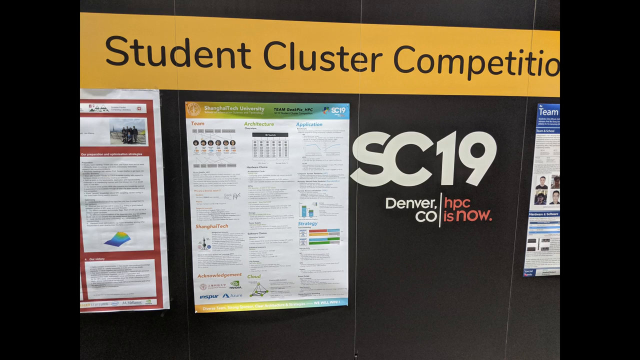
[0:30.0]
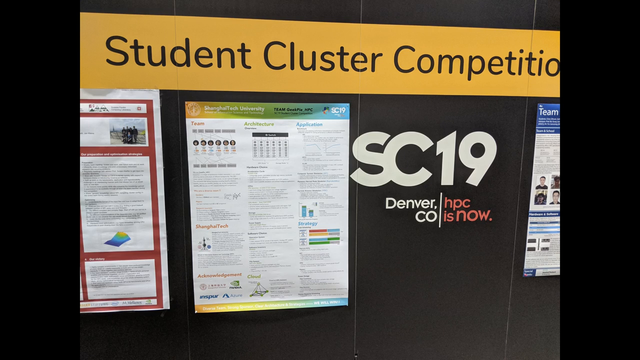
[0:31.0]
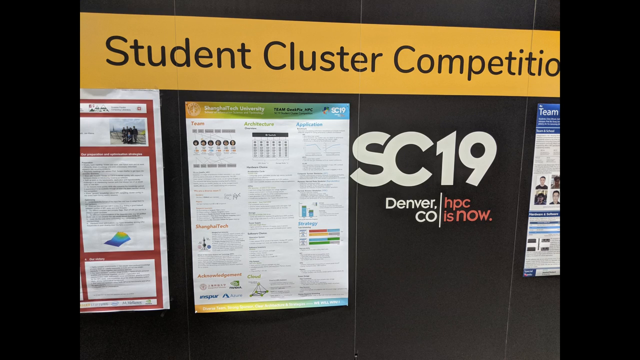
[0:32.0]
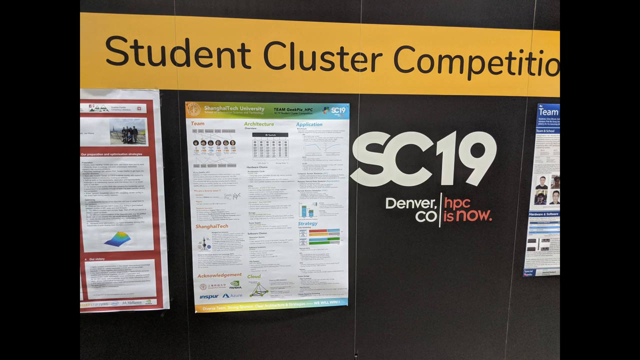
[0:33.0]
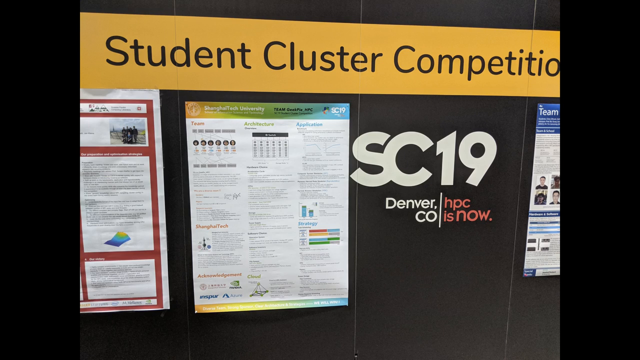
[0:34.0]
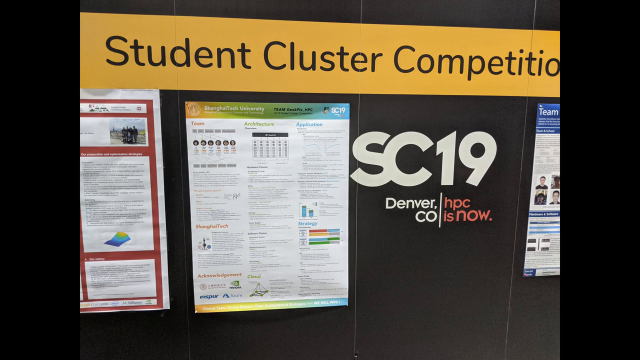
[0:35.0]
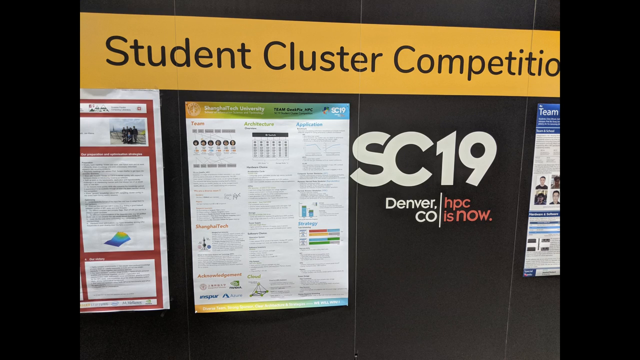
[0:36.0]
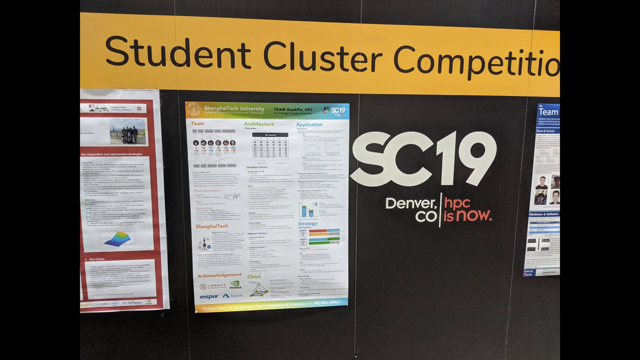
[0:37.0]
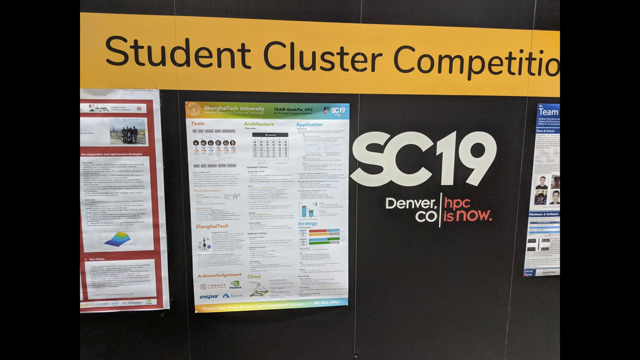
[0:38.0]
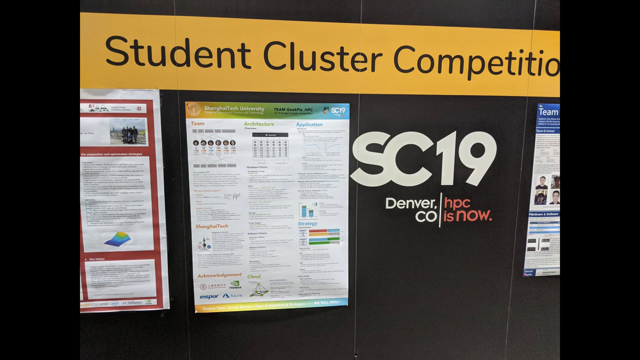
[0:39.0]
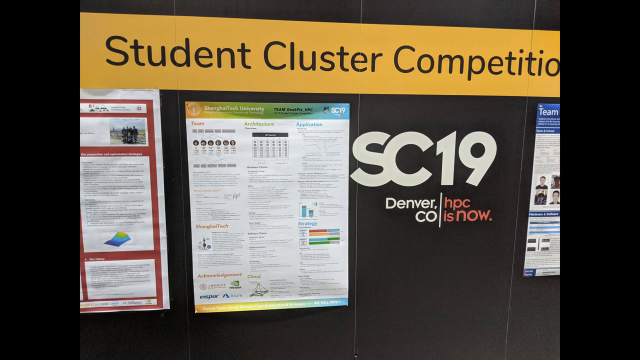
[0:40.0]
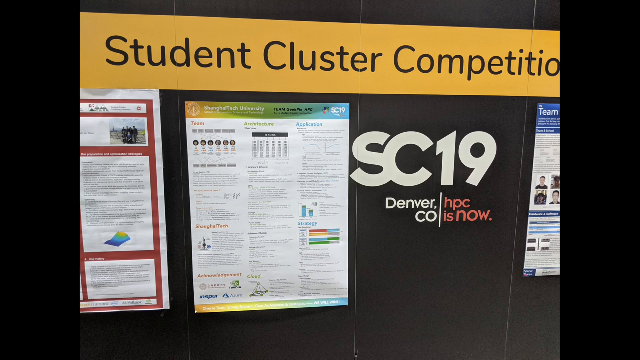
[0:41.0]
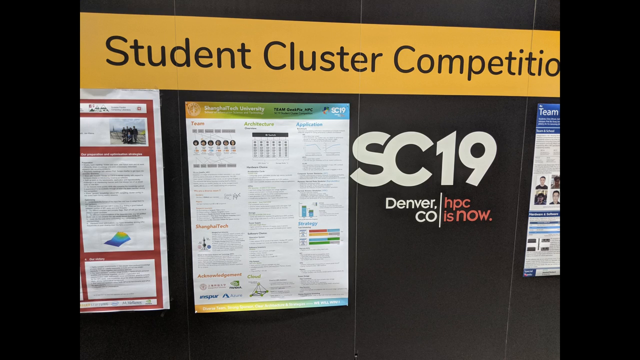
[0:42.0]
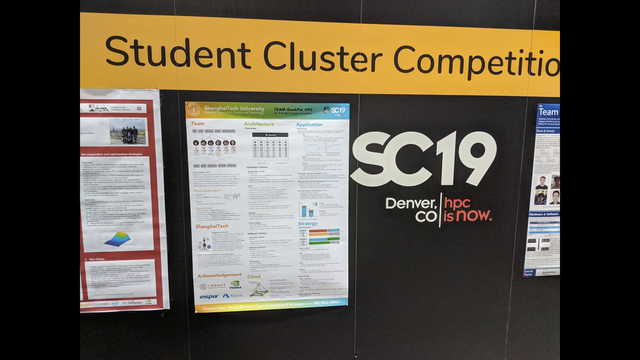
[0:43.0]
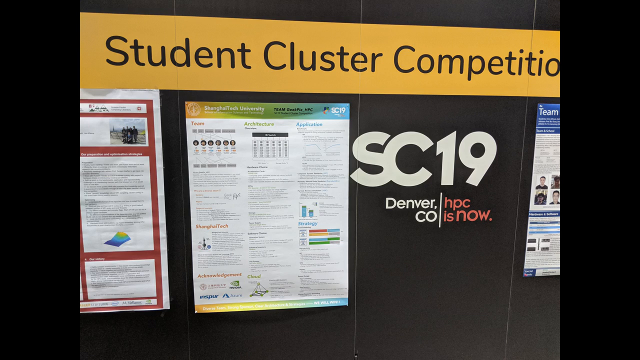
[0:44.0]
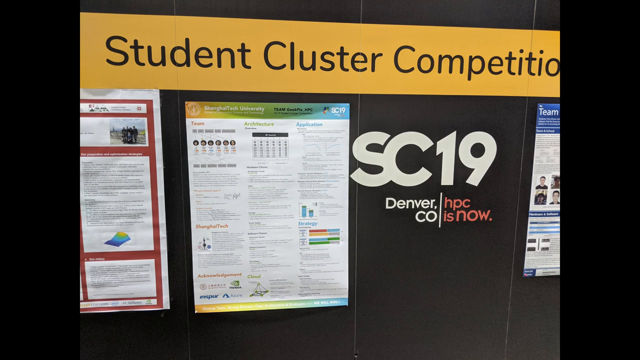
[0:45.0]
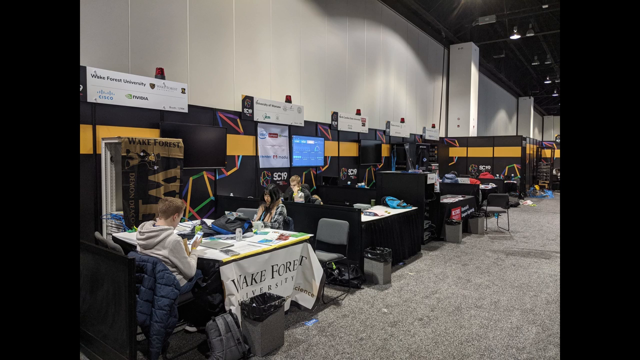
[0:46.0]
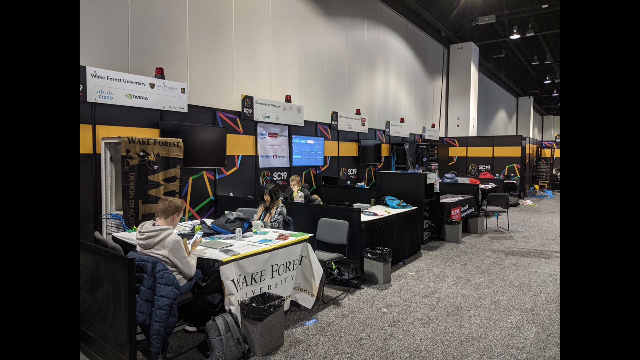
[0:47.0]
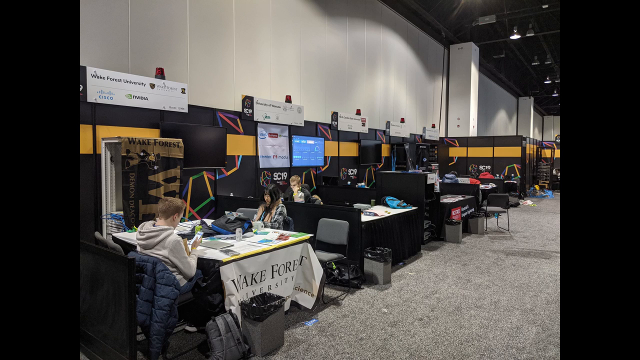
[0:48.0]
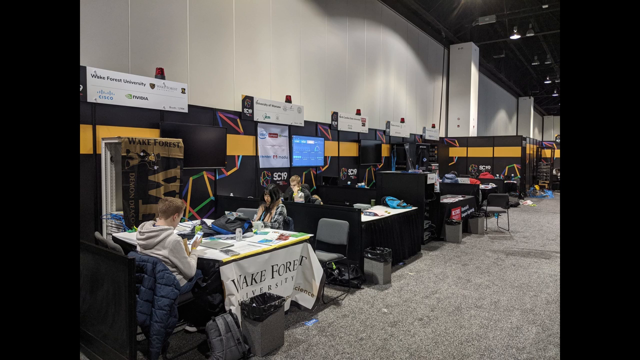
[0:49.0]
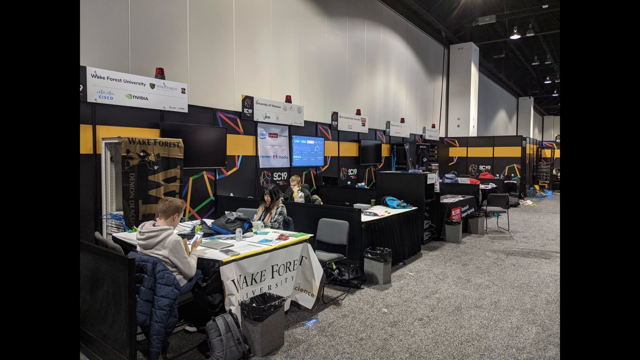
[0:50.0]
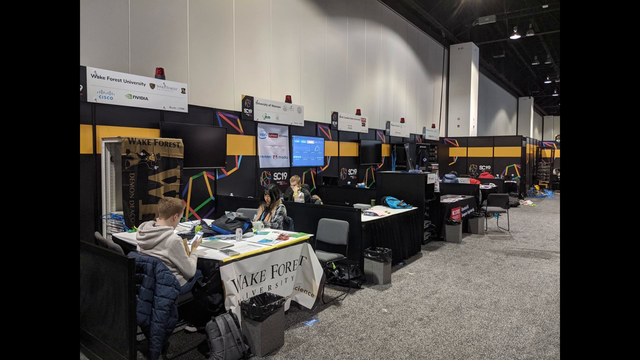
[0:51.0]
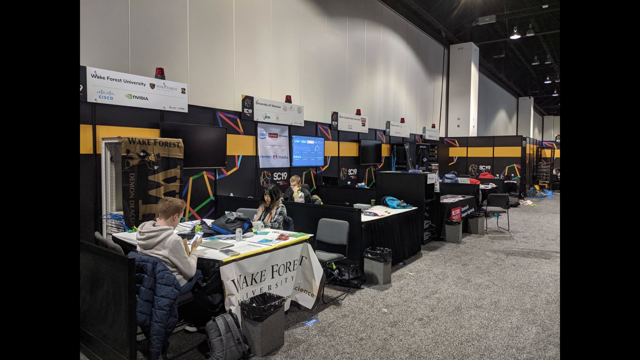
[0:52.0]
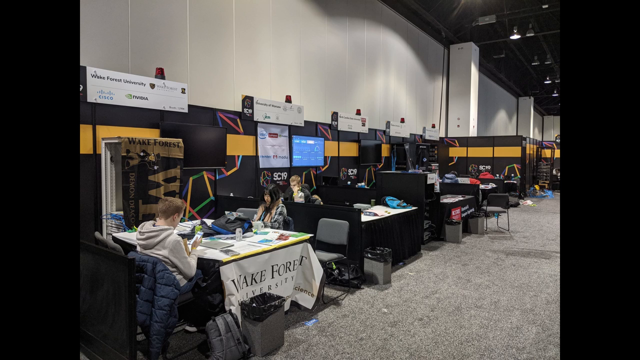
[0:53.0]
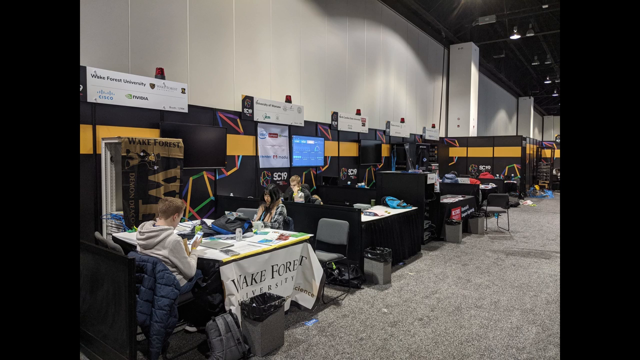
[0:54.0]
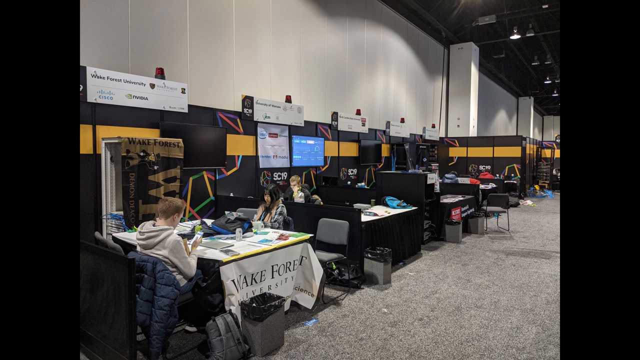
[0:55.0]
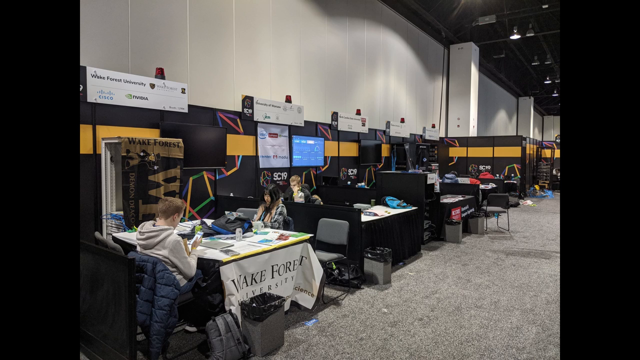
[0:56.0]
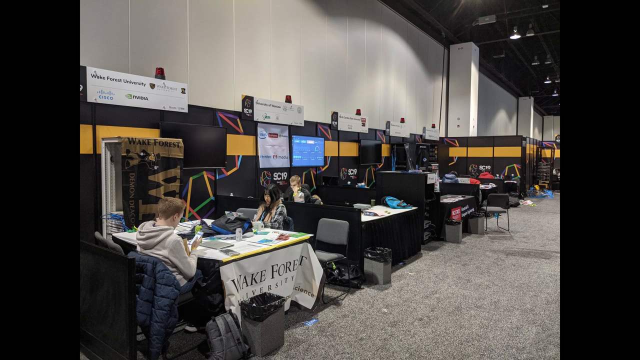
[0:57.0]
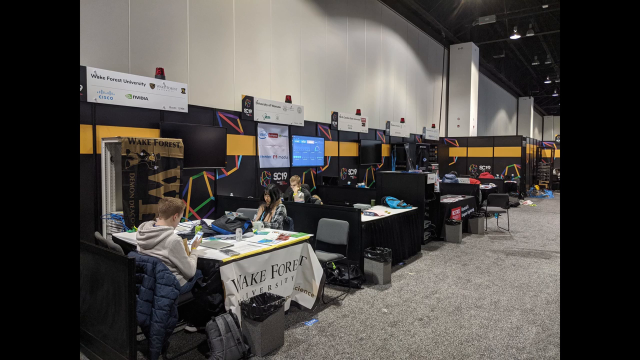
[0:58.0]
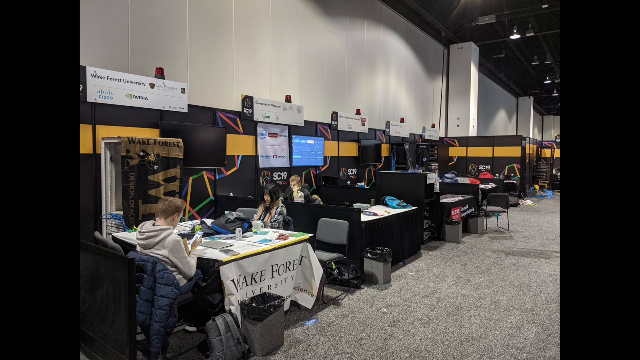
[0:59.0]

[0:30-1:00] A close-up shows the black display panel section. The walls are black and smooth, with several articles and posters pasted or fixed to them: two on the far left and one on the far right. At the top is a yellow banner with black text that says "student cluster competition". In the bottom right center of the black panel, white text says "SC19 Denver Colorado", and to its right, red text says "HPC is now". The shot stays on this area for several seconds. Near the end, the next shot shows a large area with several tables and booth-style areas set up, with people from different universities sitting there. Wake Forest is in the bottom left corner, and these appear to be students from different universities entering the competition.